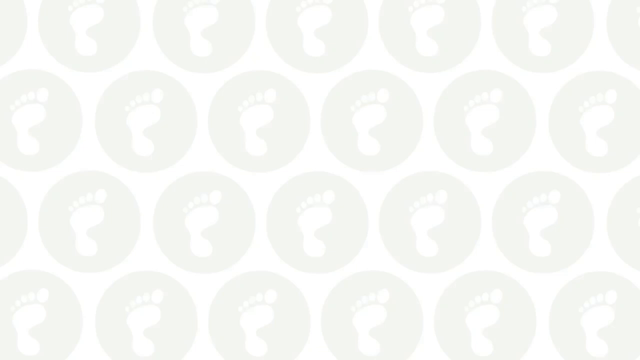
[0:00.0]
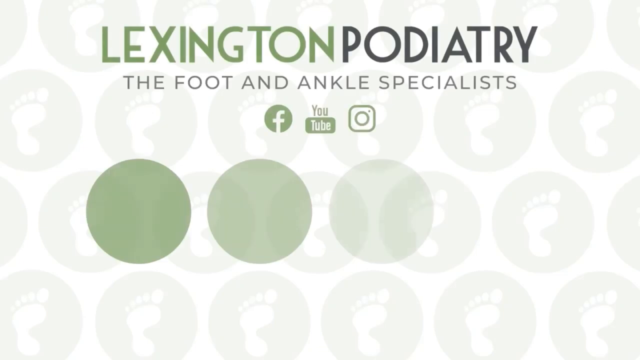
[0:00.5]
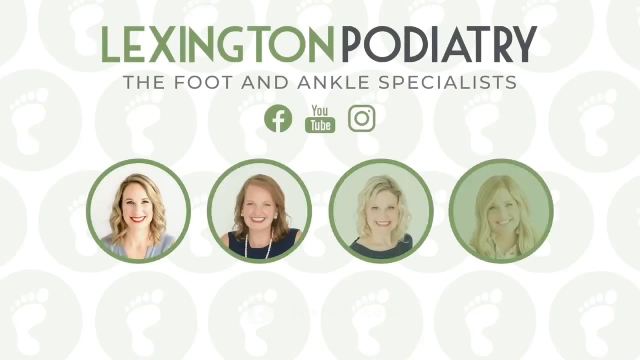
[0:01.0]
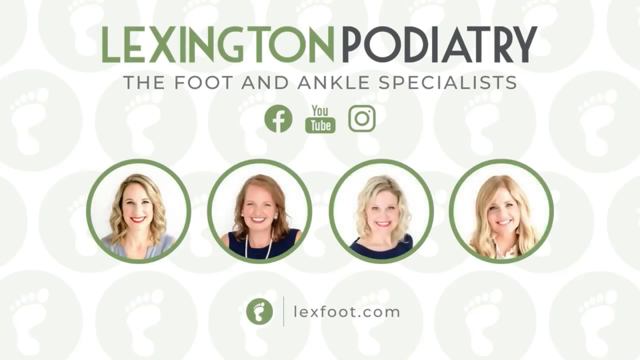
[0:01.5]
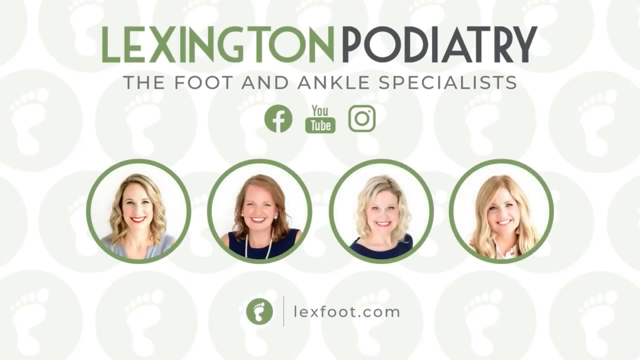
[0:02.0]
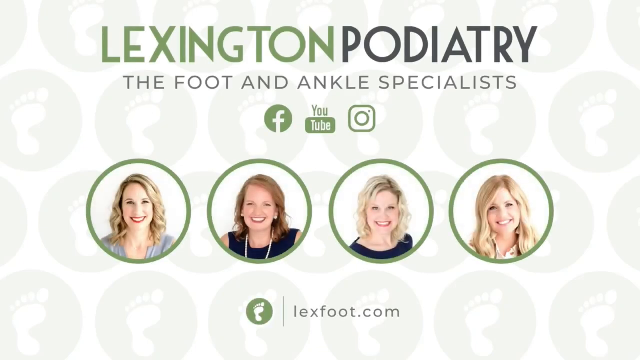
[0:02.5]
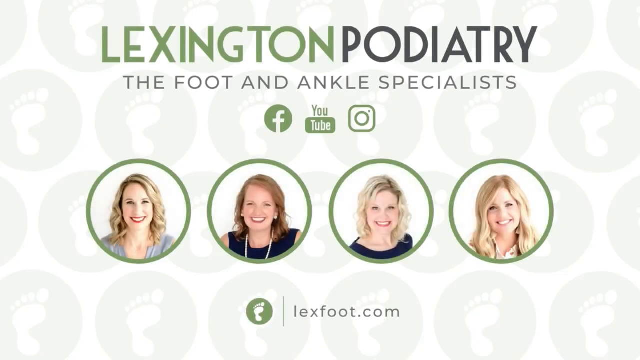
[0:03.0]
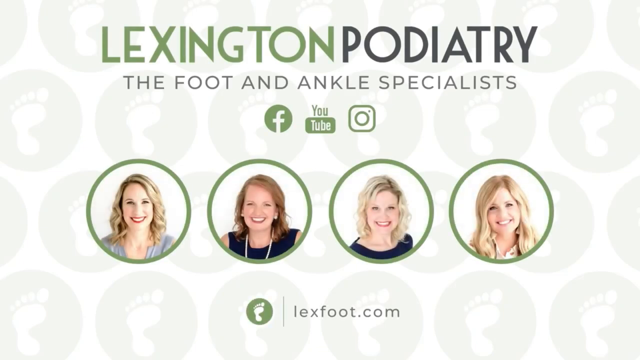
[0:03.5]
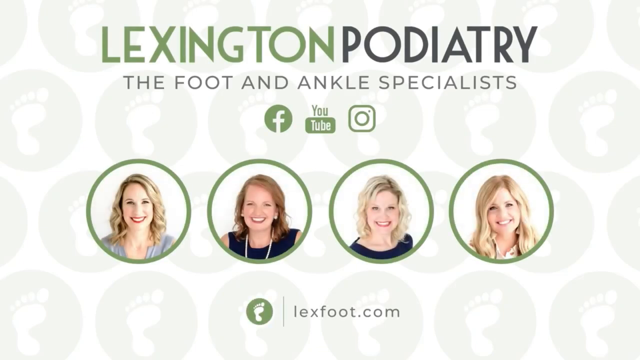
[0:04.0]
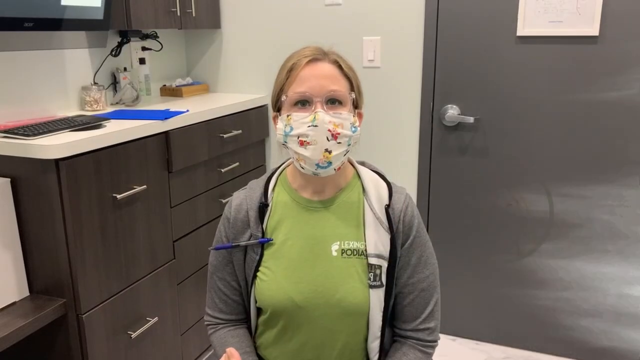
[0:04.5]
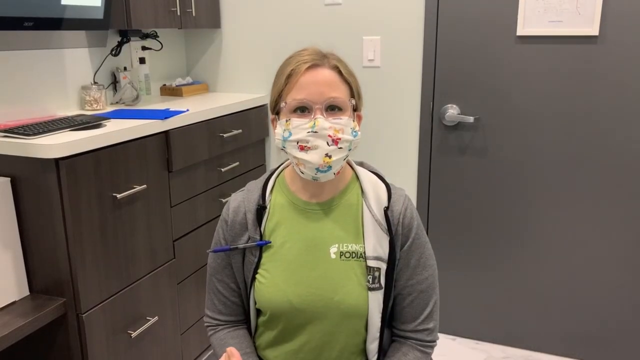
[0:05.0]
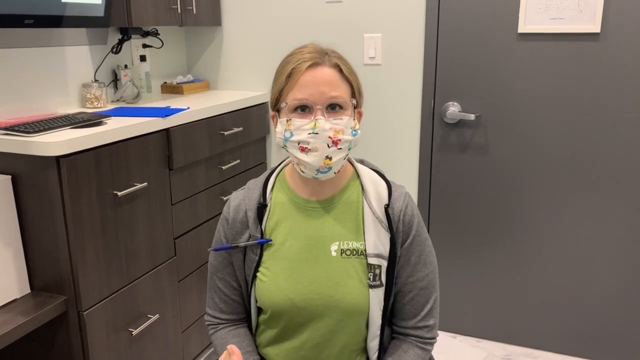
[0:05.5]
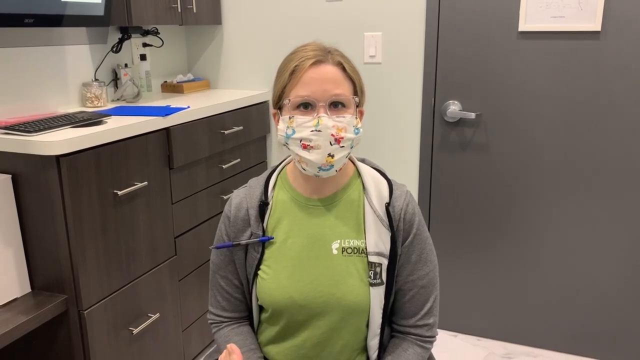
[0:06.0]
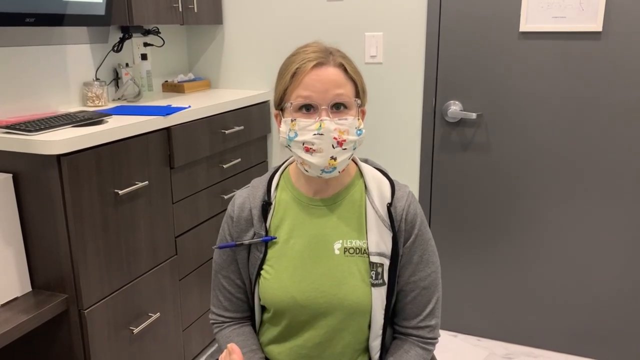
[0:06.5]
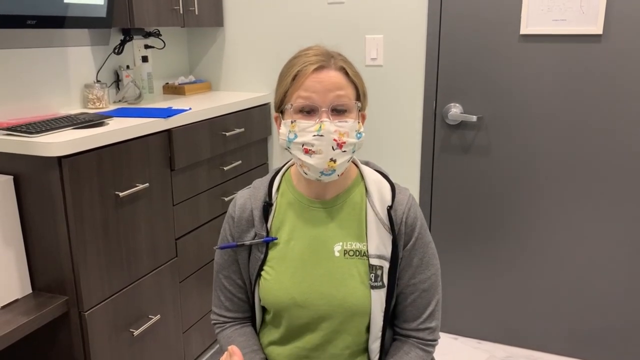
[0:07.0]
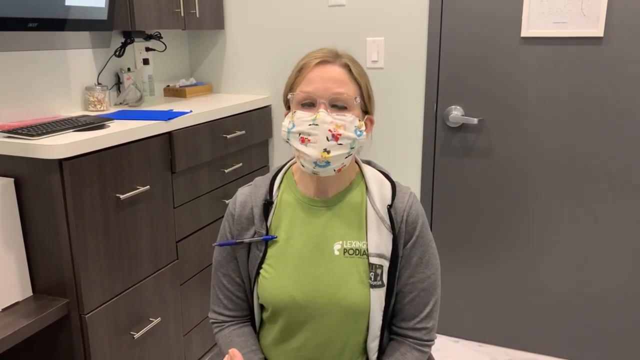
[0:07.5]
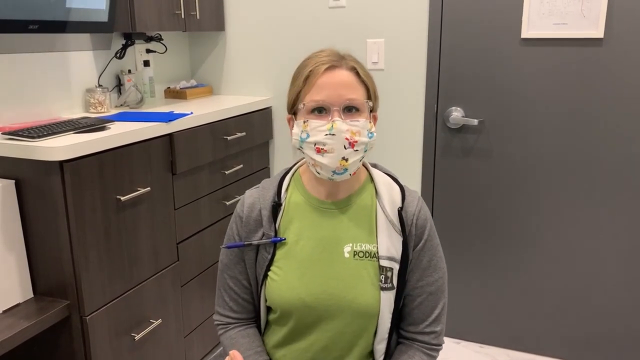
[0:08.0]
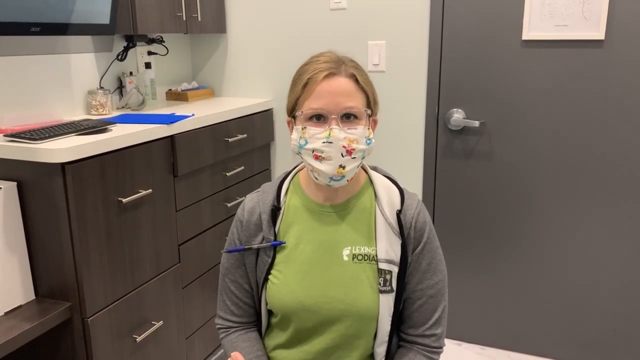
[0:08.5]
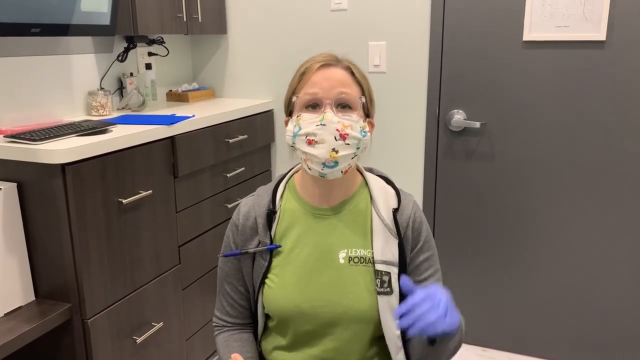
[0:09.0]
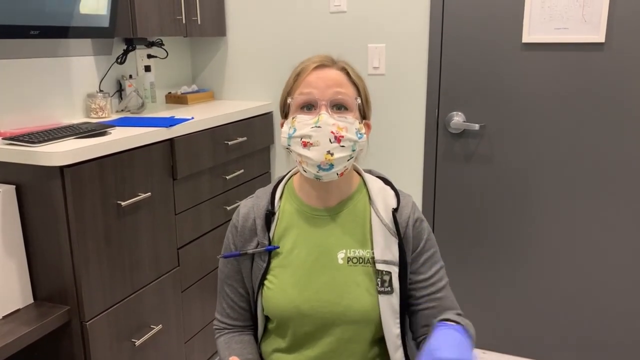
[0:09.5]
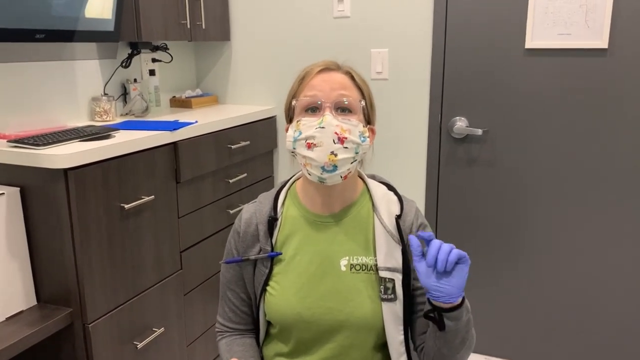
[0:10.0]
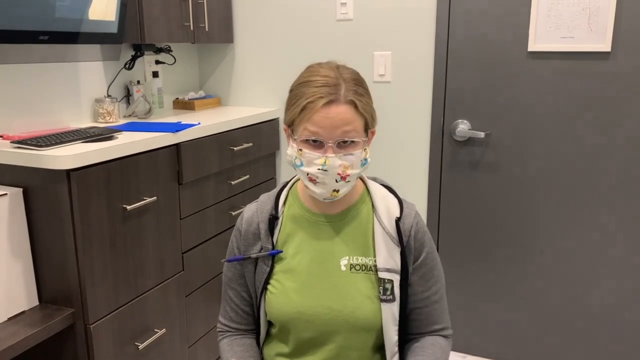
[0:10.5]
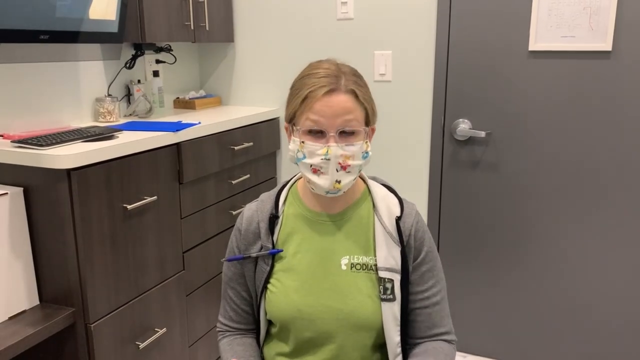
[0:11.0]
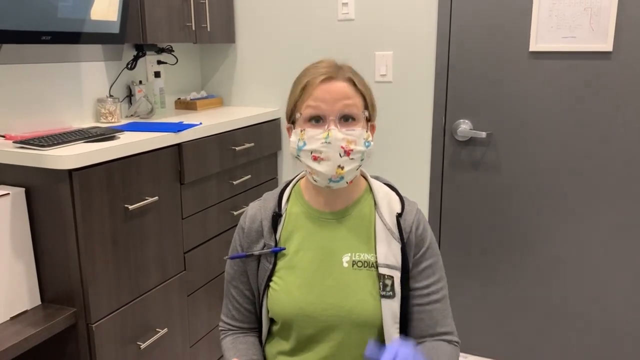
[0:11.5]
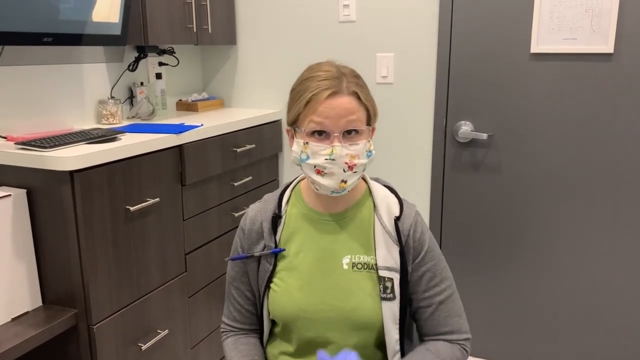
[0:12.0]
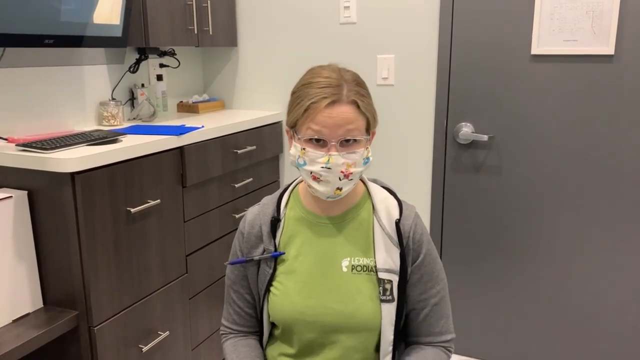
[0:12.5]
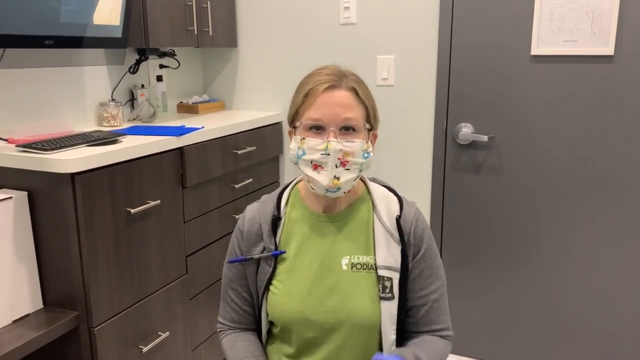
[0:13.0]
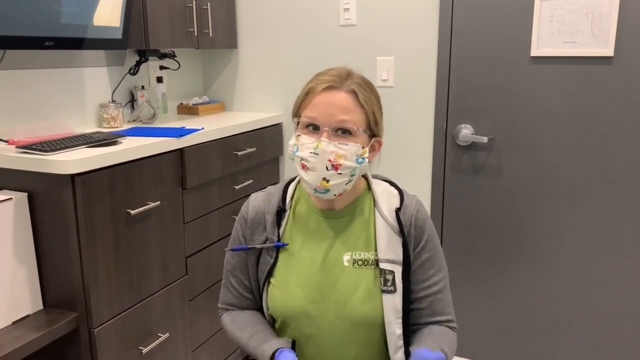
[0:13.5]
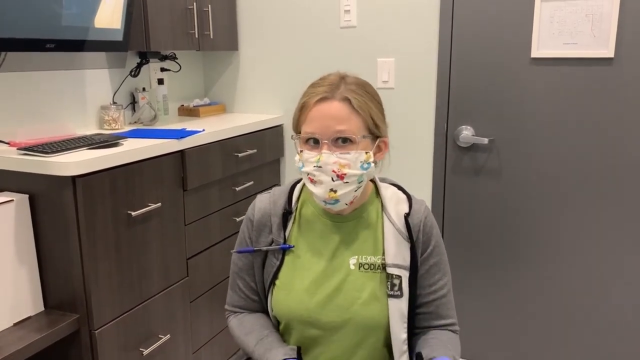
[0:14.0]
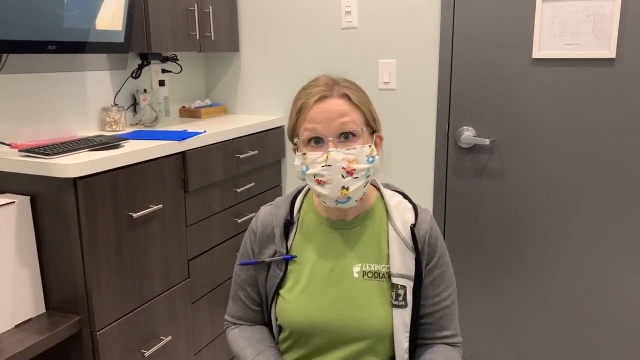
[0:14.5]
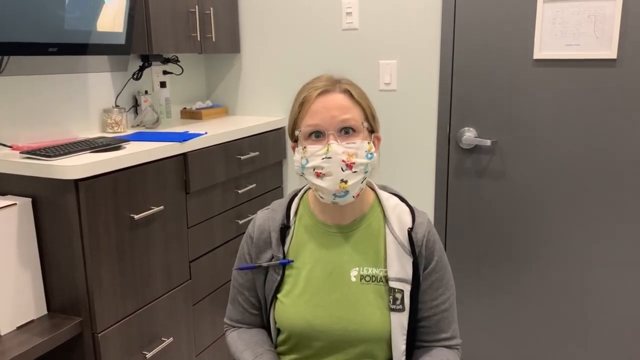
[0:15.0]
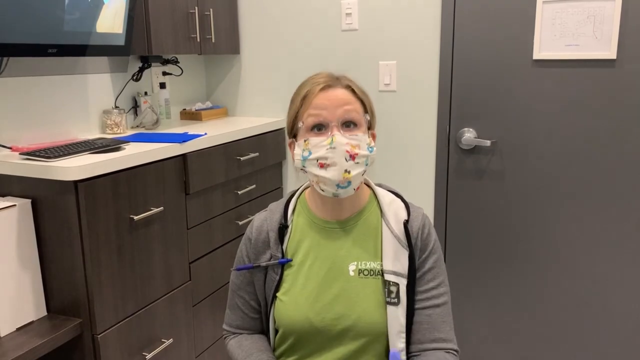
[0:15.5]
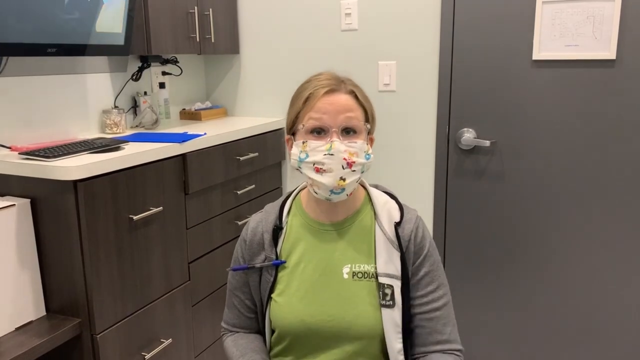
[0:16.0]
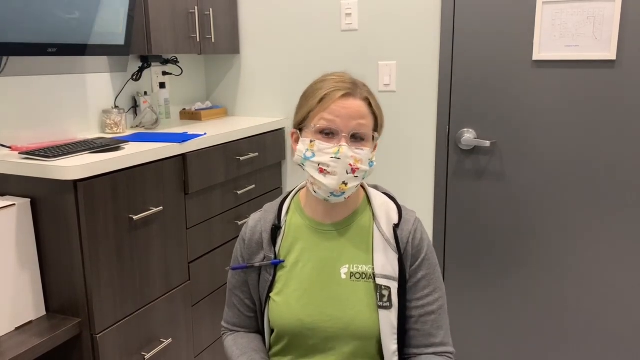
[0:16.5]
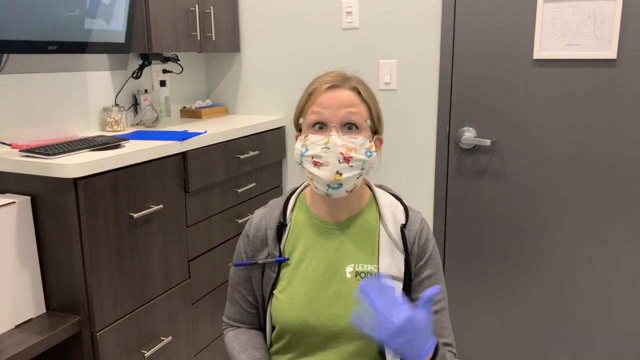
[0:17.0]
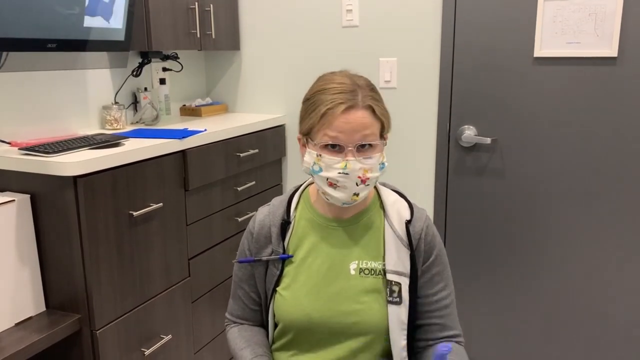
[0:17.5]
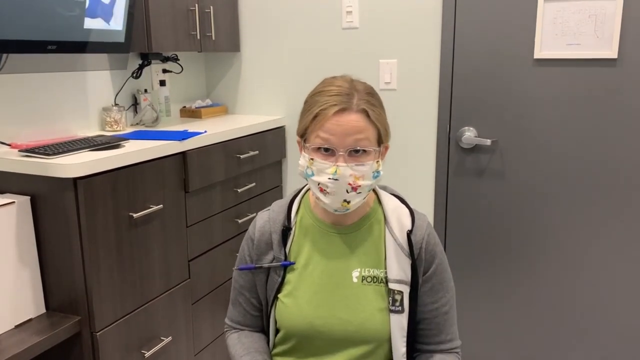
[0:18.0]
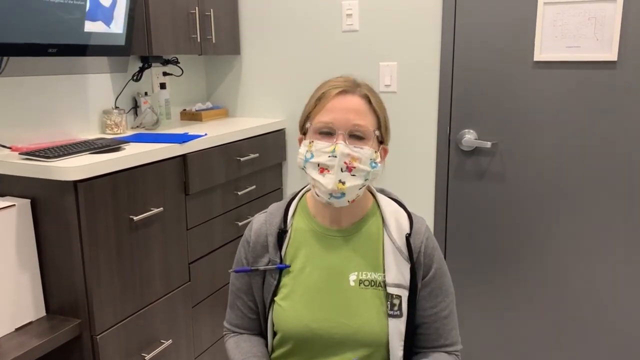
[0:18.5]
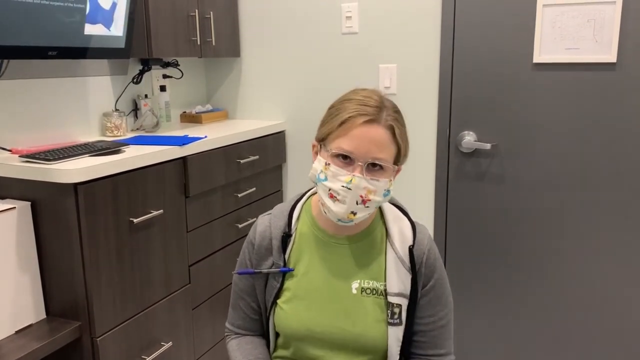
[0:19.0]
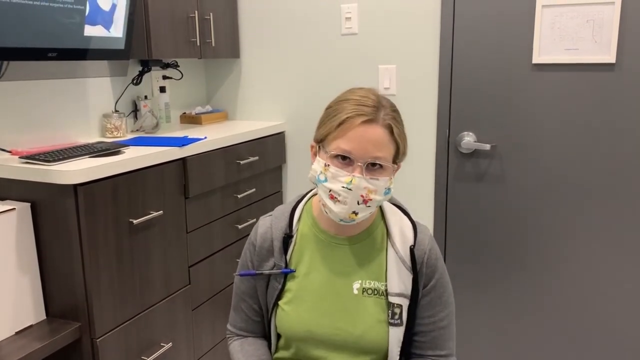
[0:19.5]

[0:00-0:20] A person with blonde hair wears a mask and blue gloves. She talks directly to the audience. Various logos appear in the background, forming patterns.